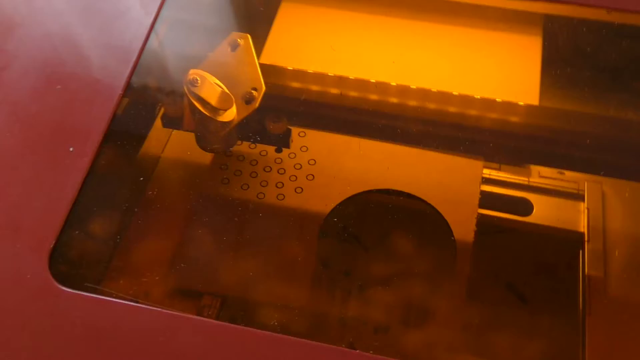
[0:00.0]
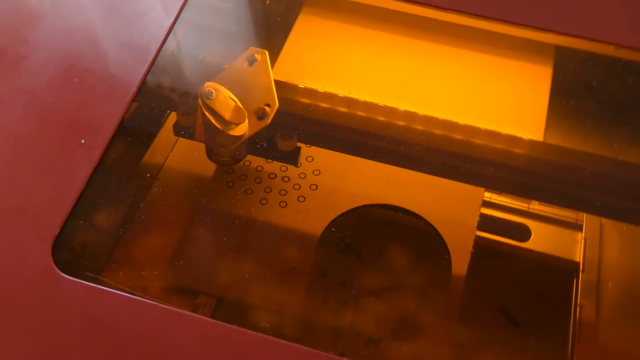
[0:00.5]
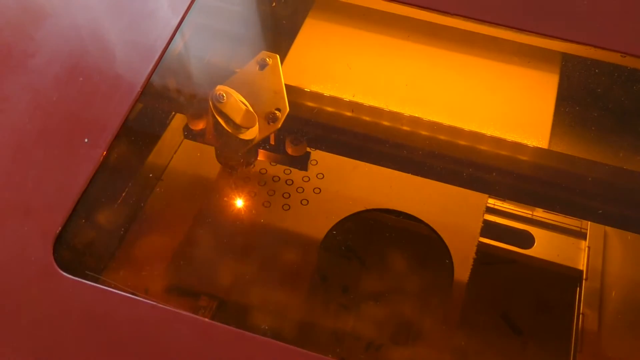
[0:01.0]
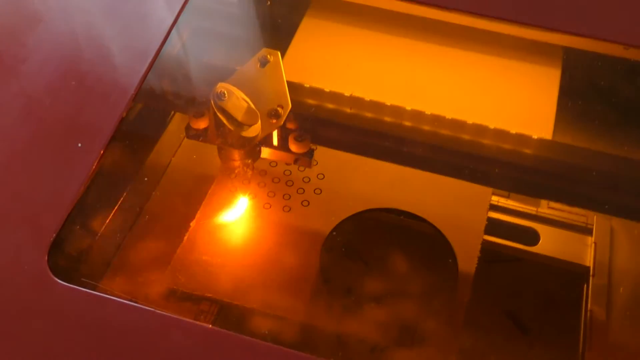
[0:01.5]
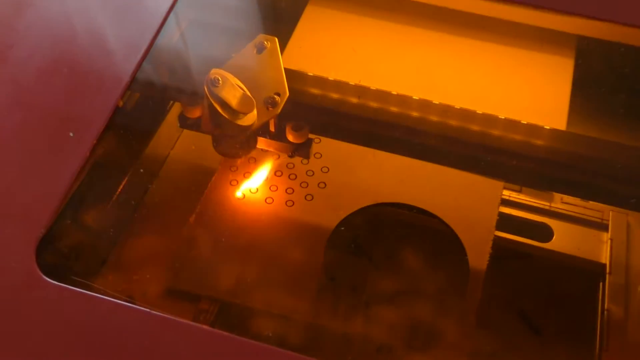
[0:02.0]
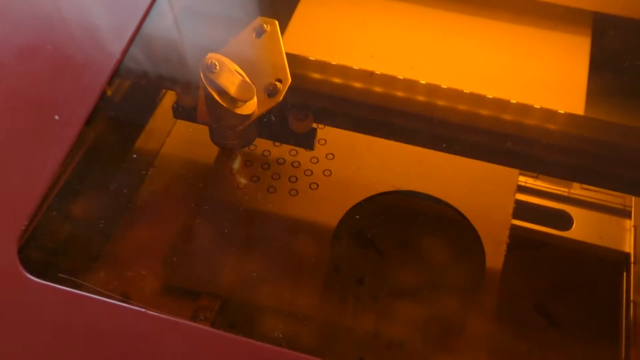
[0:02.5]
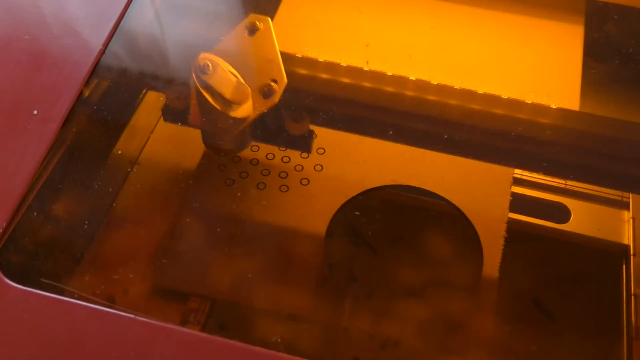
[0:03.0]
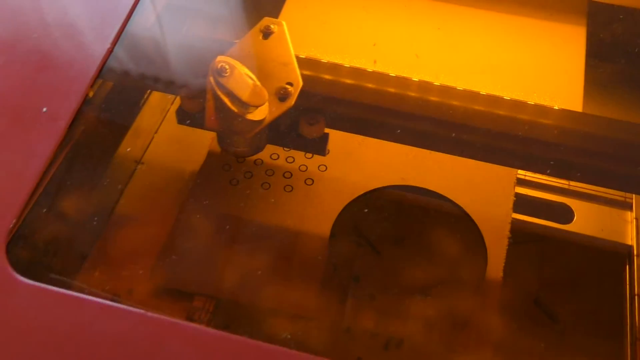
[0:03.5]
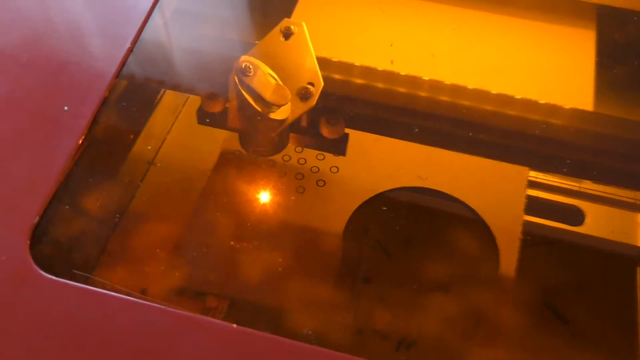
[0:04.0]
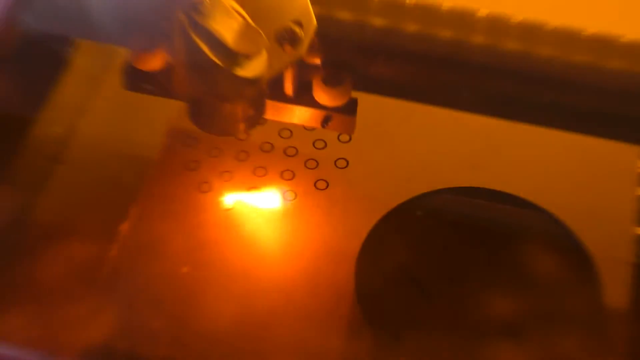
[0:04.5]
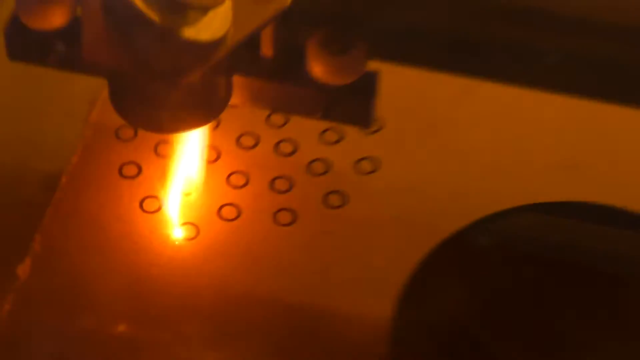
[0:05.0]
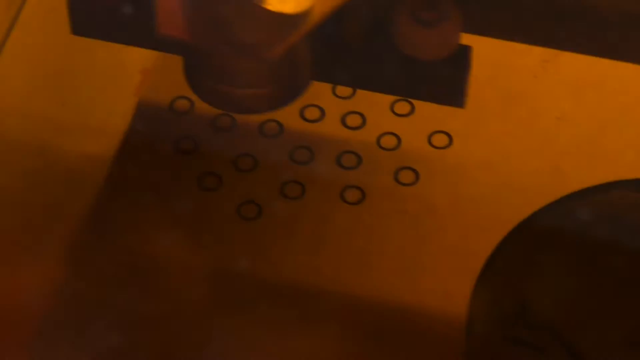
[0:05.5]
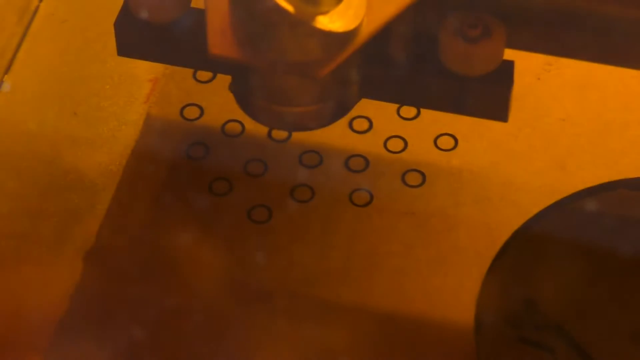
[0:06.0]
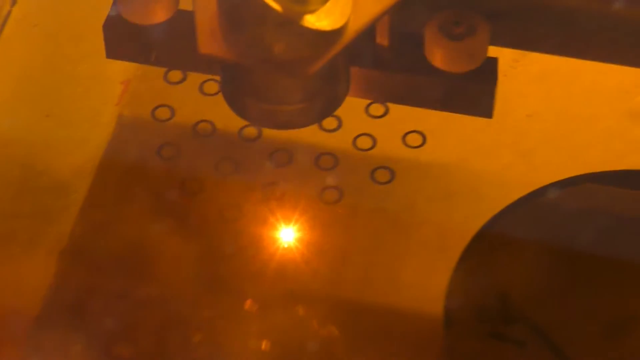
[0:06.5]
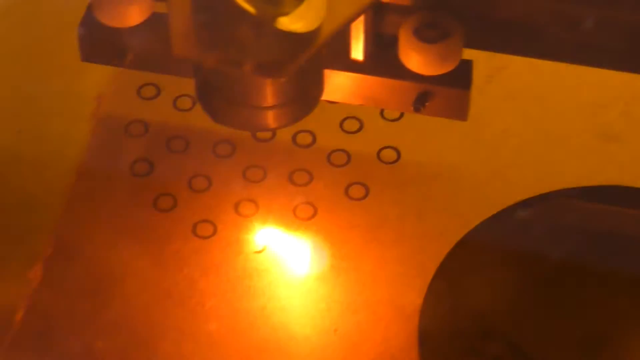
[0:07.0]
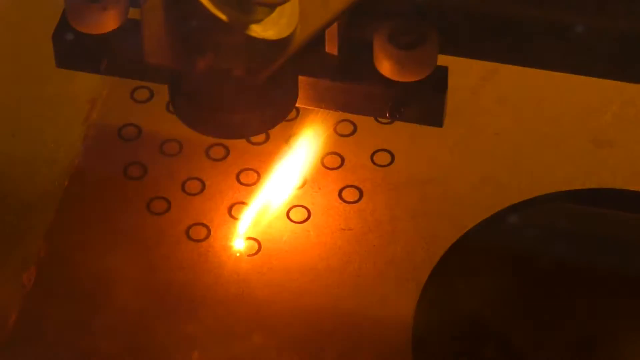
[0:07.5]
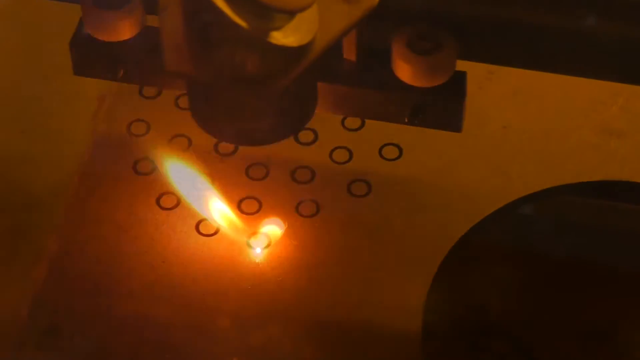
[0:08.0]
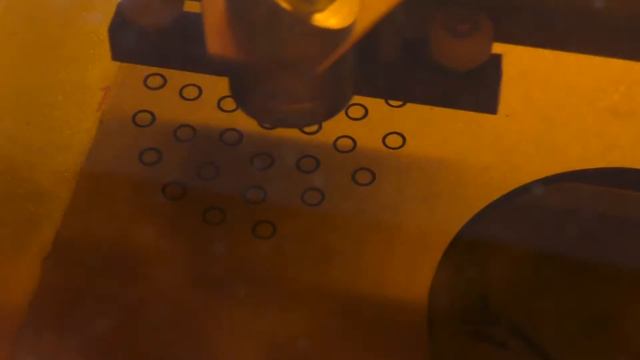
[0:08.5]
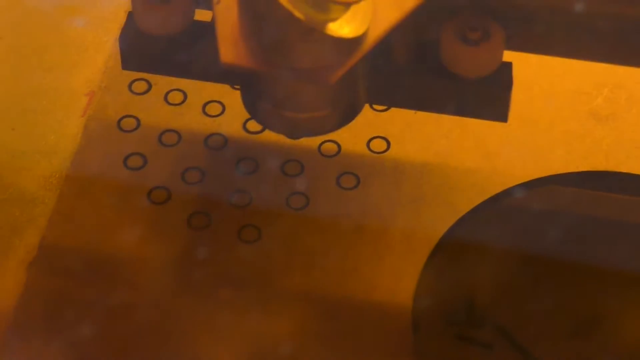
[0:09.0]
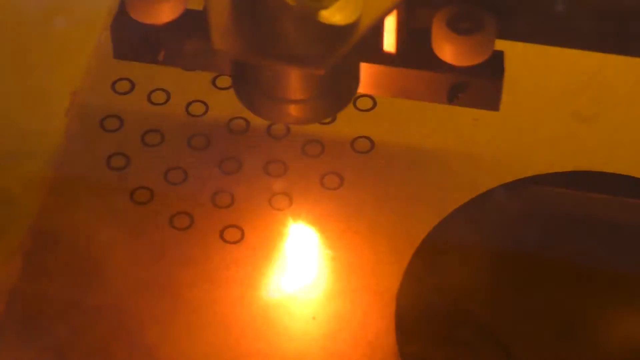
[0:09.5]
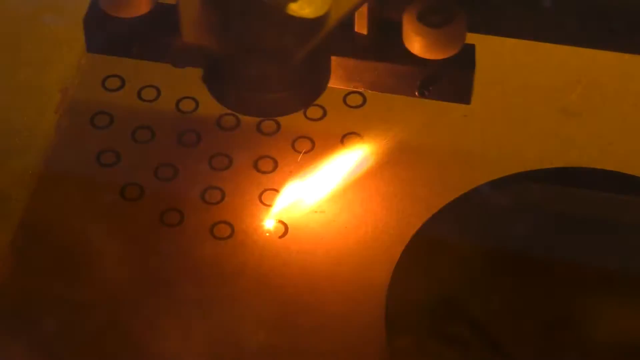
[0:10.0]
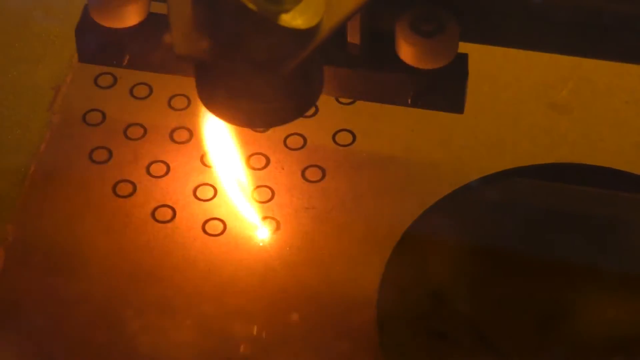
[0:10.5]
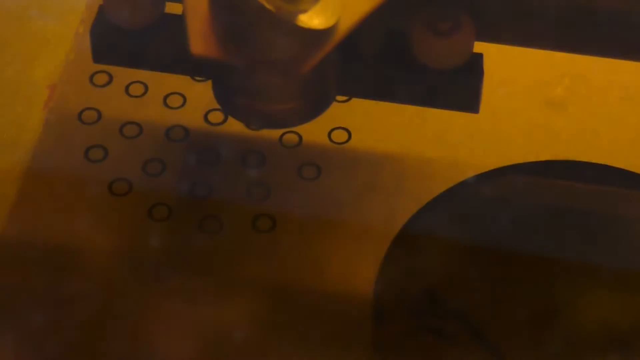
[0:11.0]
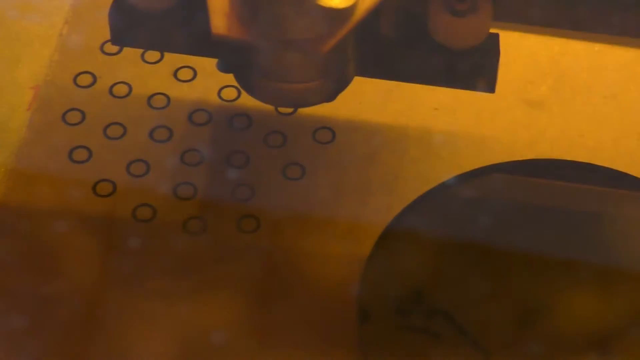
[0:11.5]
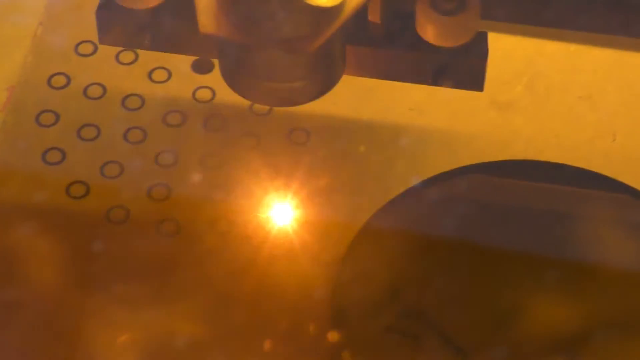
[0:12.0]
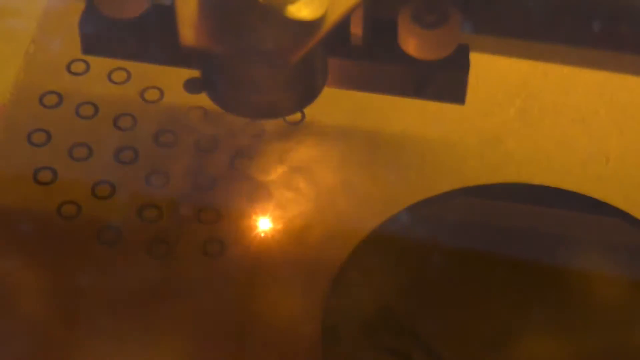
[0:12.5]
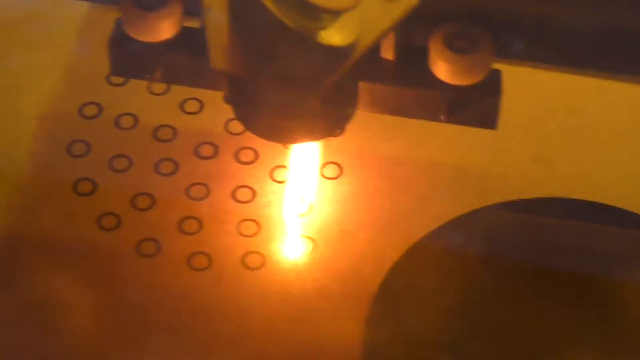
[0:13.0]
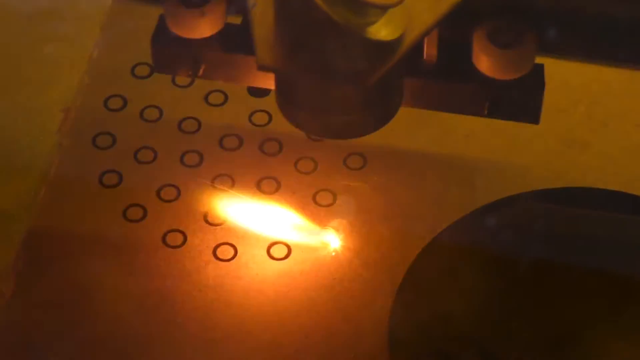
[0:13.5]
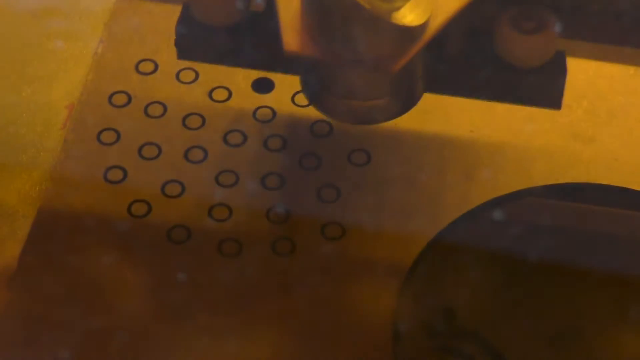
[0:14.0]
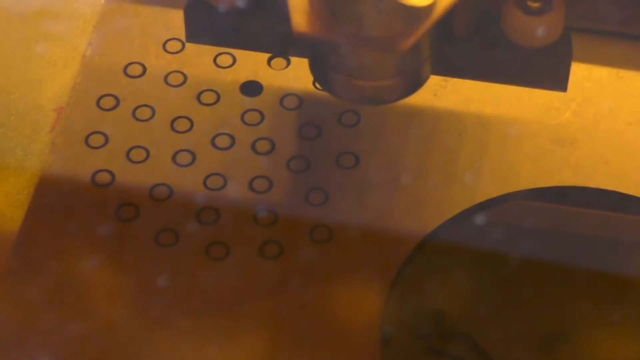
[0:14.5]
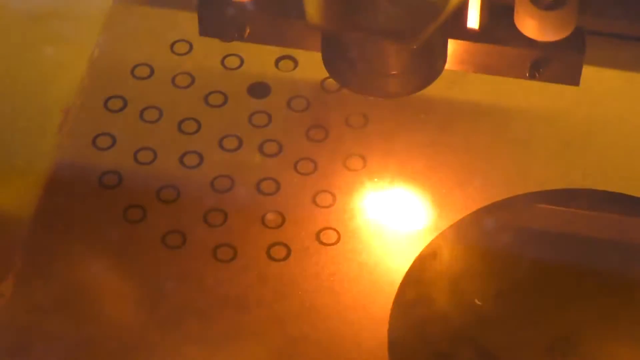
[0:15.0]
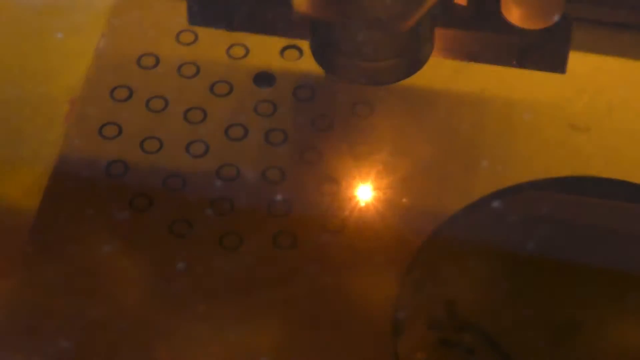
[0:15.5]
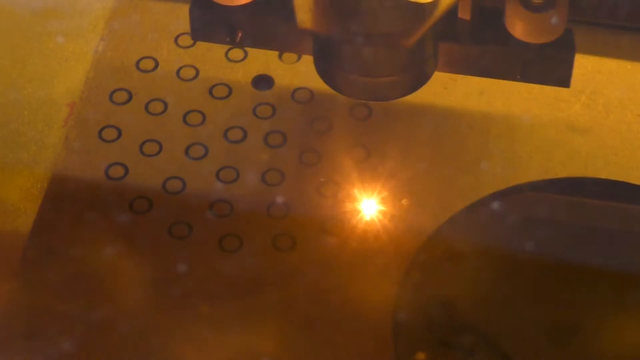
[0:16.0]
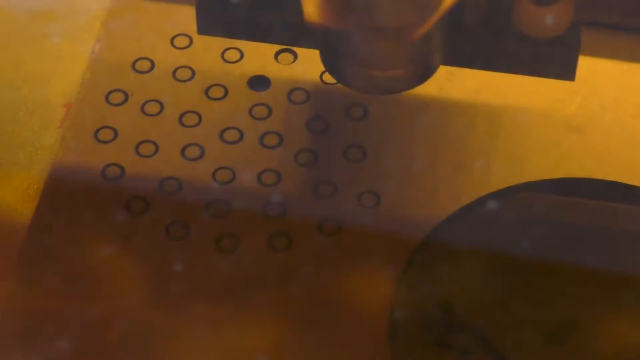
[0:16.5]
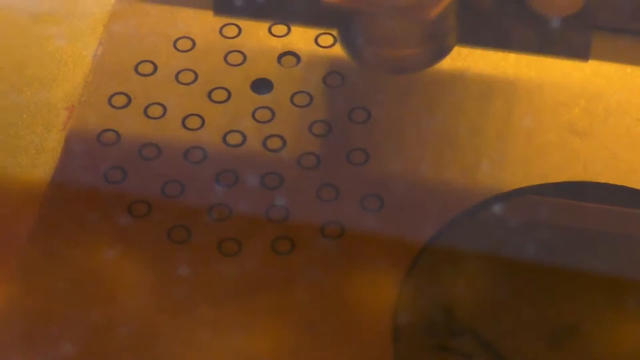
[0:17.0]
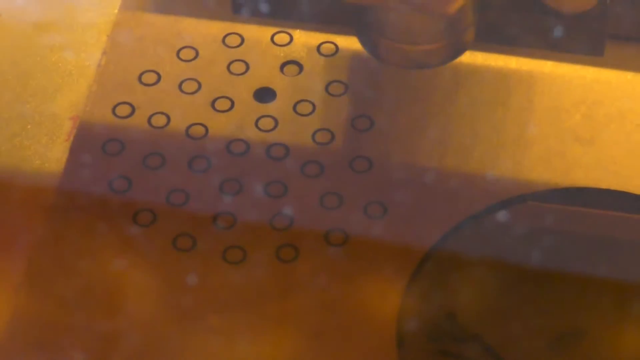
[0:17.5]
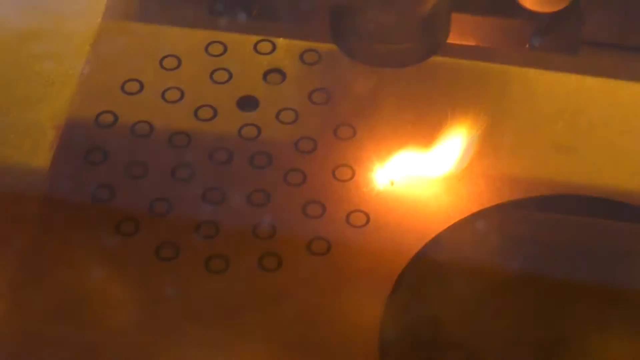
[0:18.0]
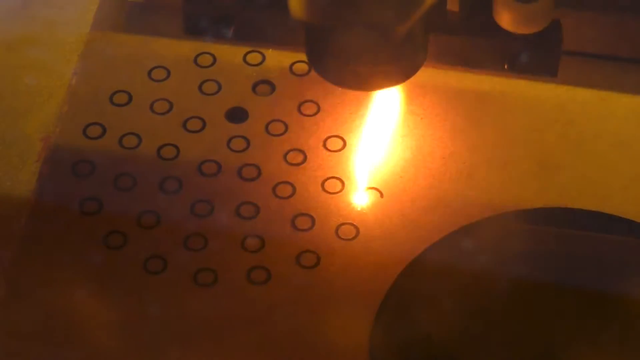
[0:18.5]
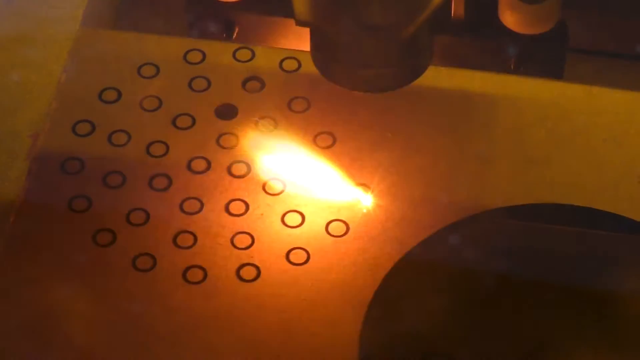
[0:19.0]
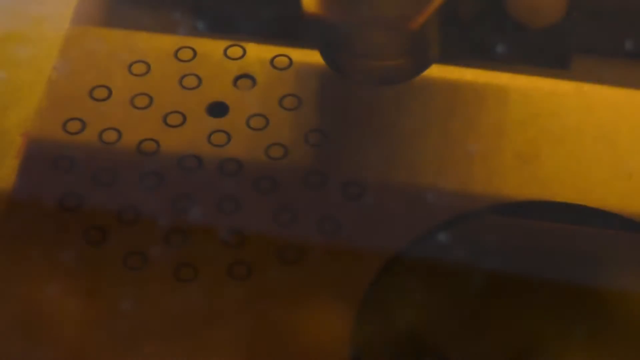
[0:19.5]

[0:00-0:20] An engraving machine, or possibly a laser machine, etches small uniform circles one after the other in a systematic order, neatly and without mistakes. The machine is gold in colour and looks new and in good condition. A bright flame seems to emanate from the machine each time a small circle is completed; the flame circles the circles one by one, creating holes in a sheet of material under a protective yellow or gold cover. The video zooms in and shows the machine's action from all angles.